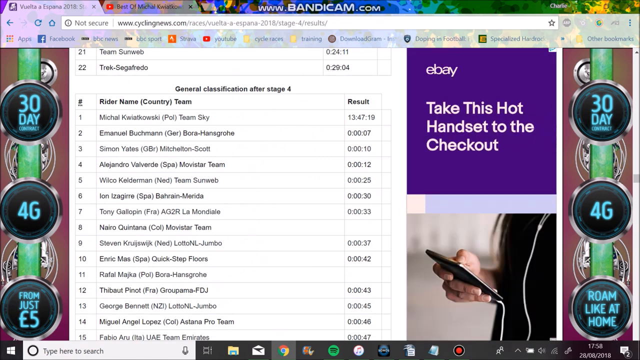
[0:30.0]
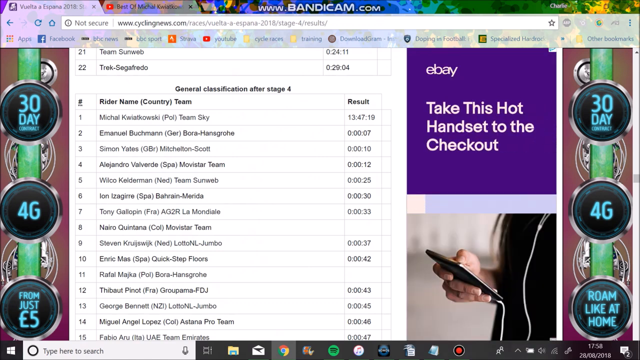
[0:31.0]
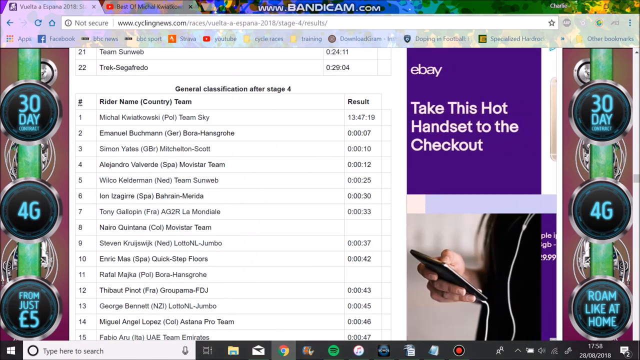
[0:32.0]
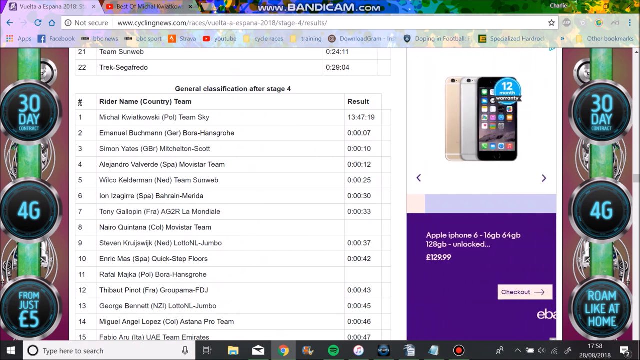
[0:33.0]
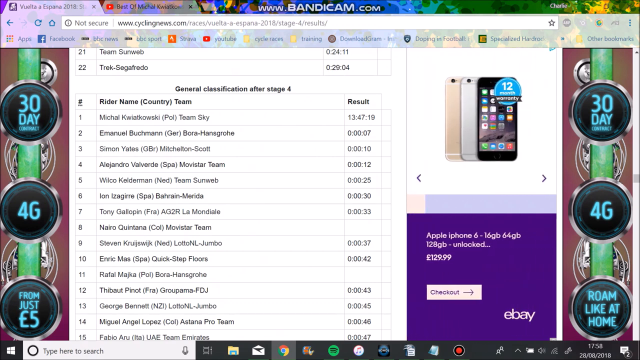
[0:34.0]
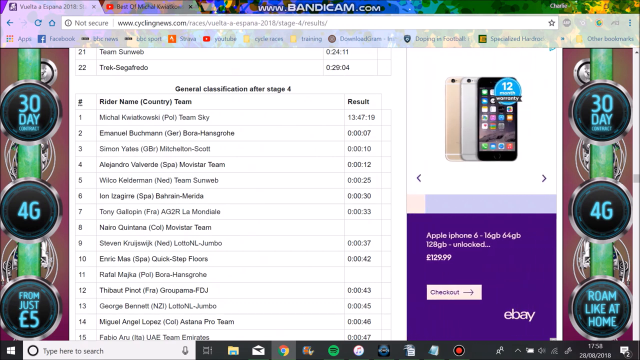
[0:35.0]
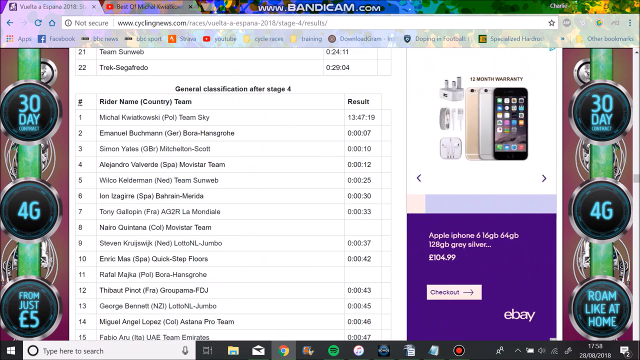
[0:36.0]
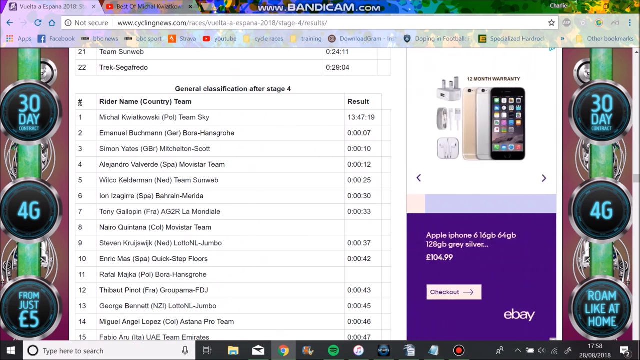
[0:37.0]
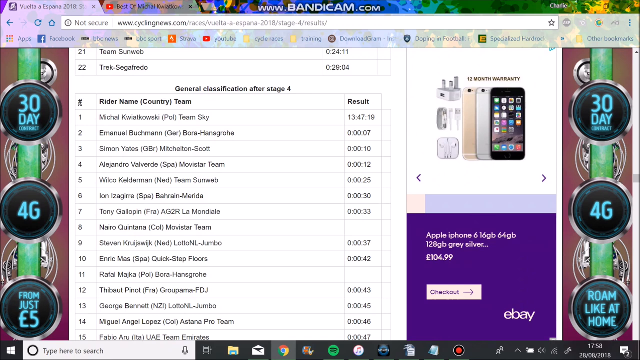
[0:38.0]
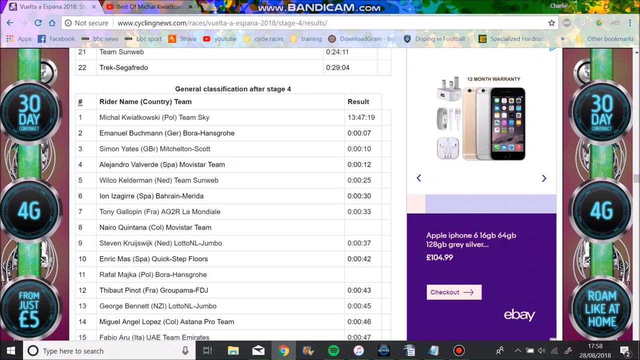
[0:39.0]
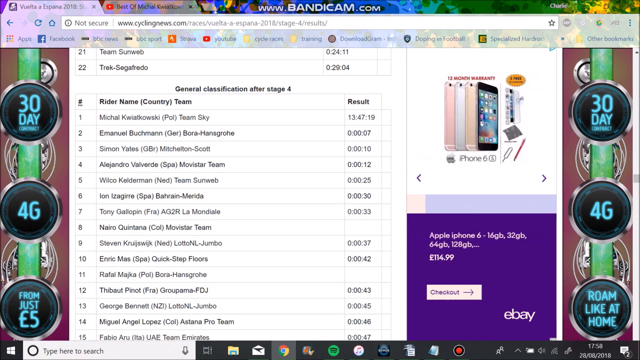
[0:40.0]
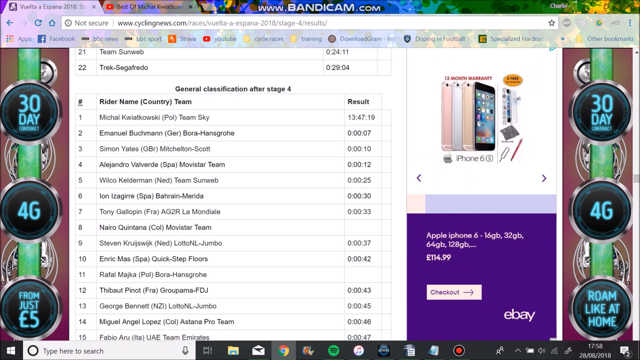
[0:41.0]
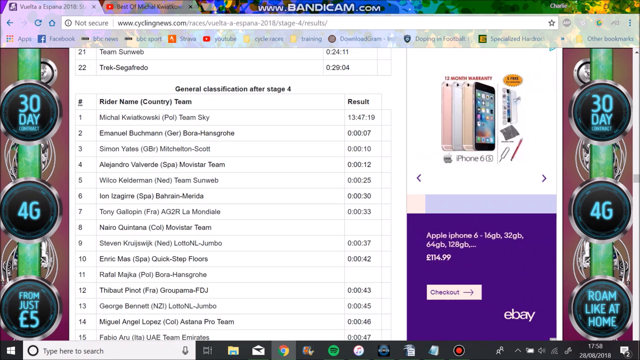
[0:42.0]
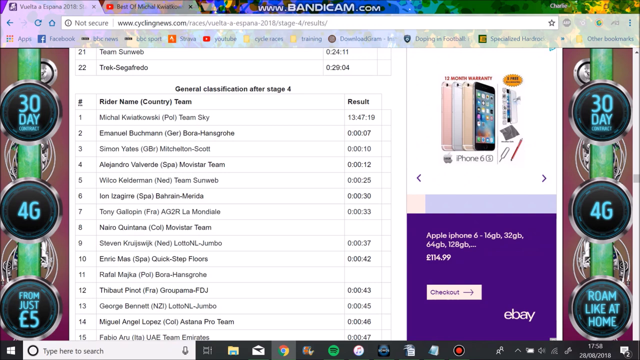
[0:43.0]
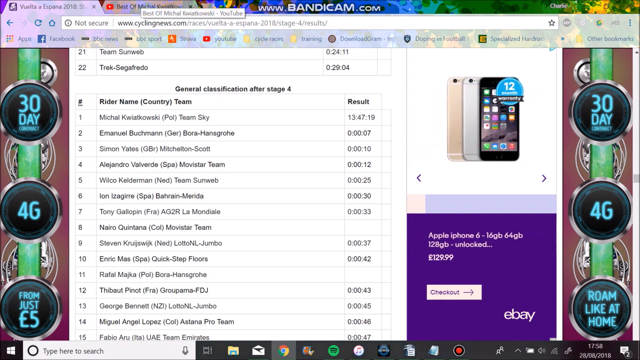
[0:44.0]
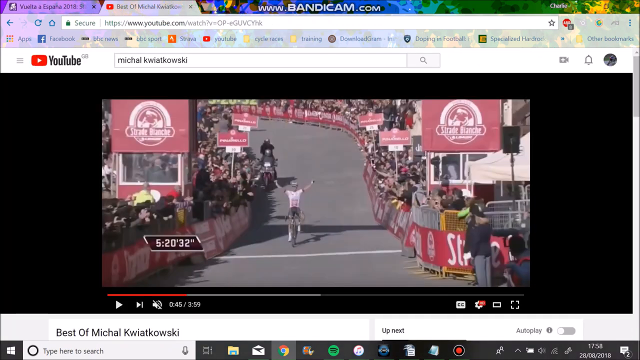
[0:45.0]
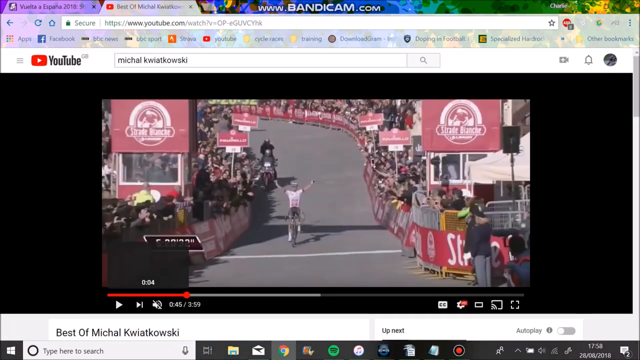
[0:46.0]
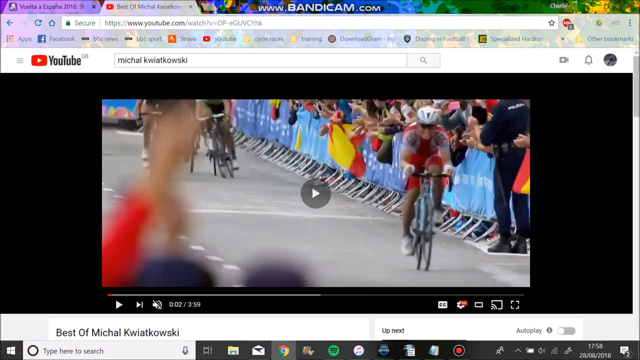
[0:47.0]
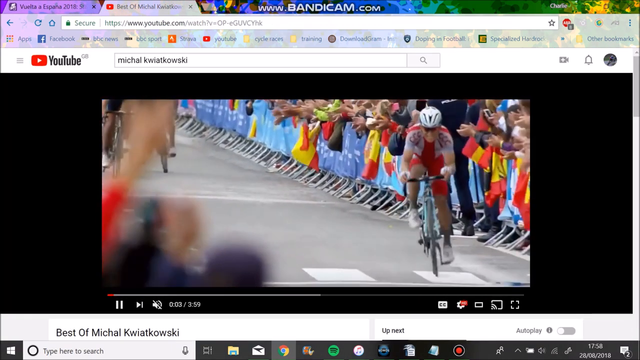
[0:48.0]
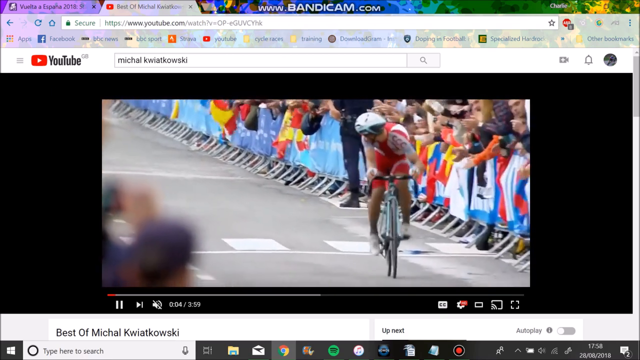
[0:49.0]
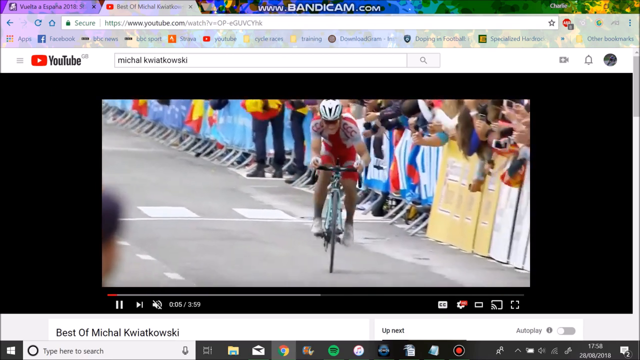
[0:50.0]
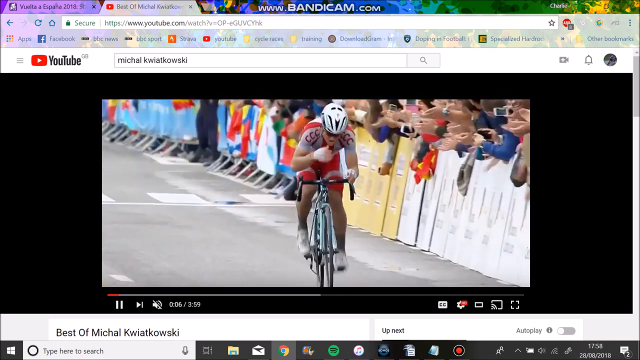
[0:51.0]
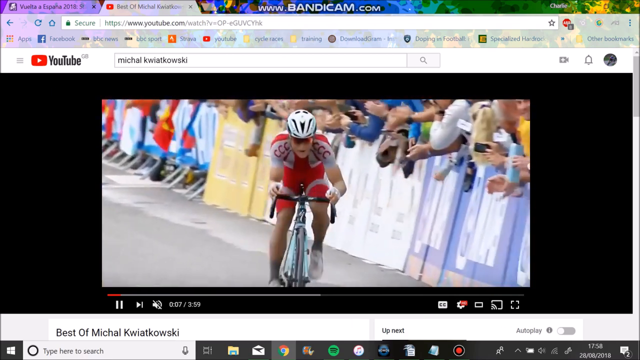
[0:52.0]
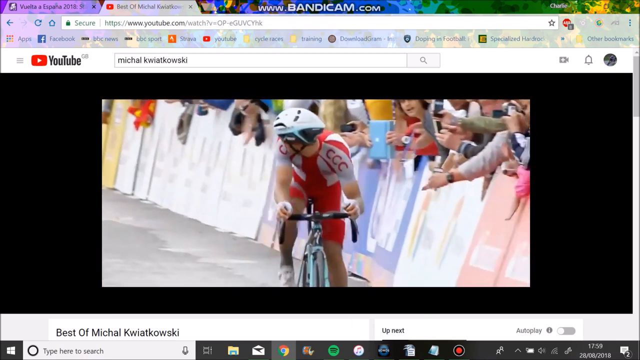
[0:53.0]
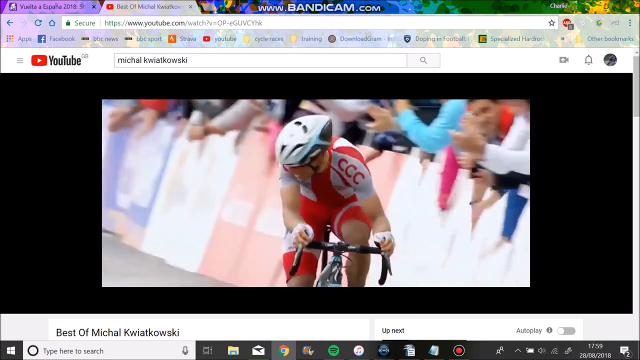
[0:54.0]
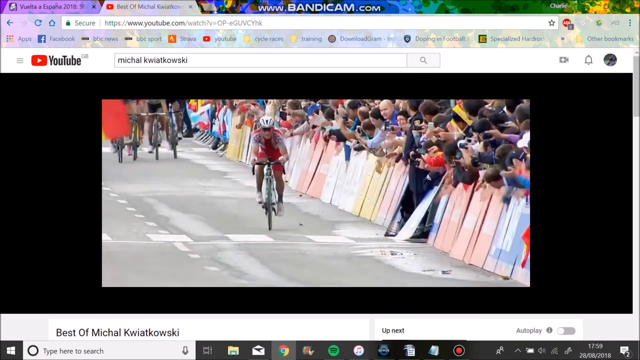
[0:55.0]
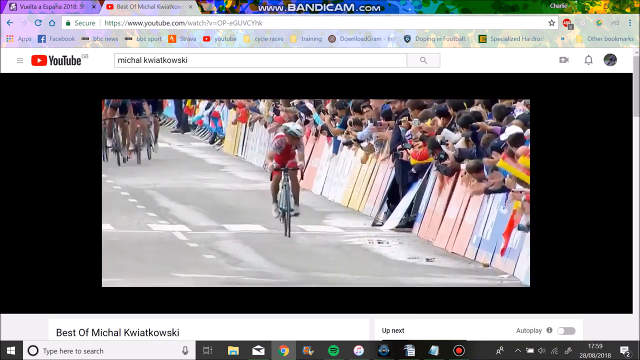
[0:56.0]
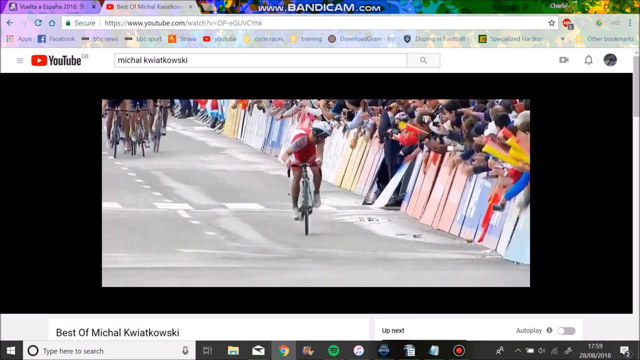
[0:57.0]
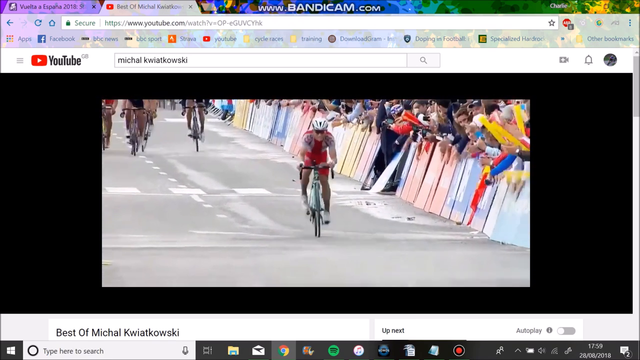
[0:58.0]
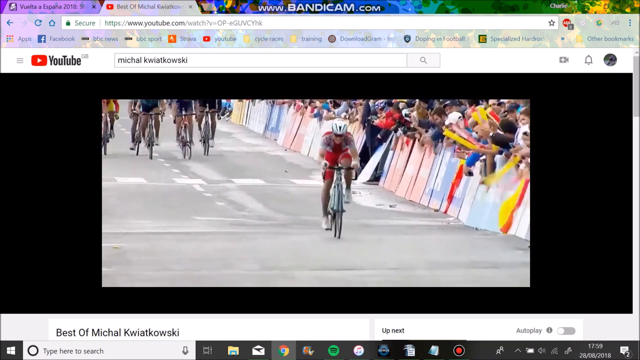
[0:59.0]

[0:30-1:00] The page displays the general classification after stage four of the cycling race, listing each rider's name, country and team along with their times. The riders listed include Michael Kwiatkowski, Emmanuel Gluckman, Simon Yates, Alejandro Valverde, Wilco Kilderman, Ion Isagiri, Tiny Galapin, Nairo Quintana, Steven Kurczewski, Enric Maas, Rafal Moshka and George Bennett, with Miguel Andro Lopez at number 14 and Fabio Aru at number 15. An eBay ad on the right side reads "take this hot hand set to the checkout". The view then cuts to a YouTube video, with "michael kwiatkowski" in the search bar, showing a cyclist in a red suit and a helmet reaching the finish line. Three or four riders follow somewhat close behind in the distance, many of them wearing black as they pedal as hard as they can.